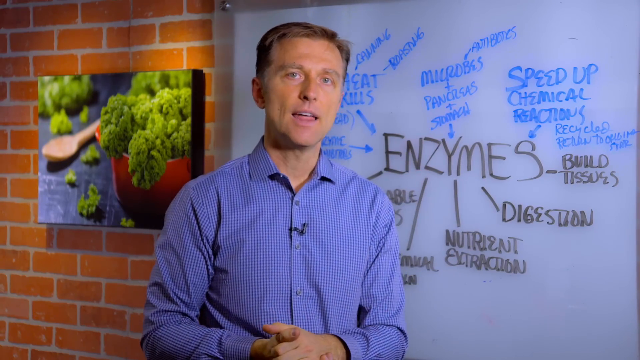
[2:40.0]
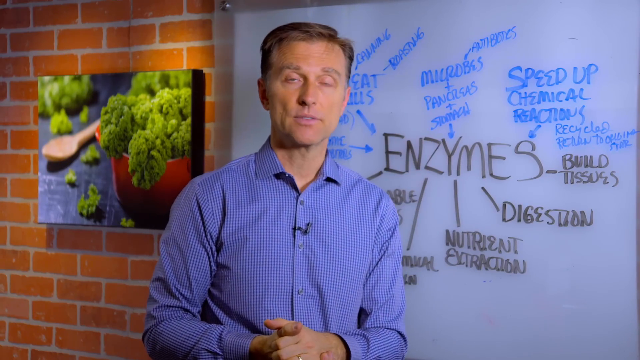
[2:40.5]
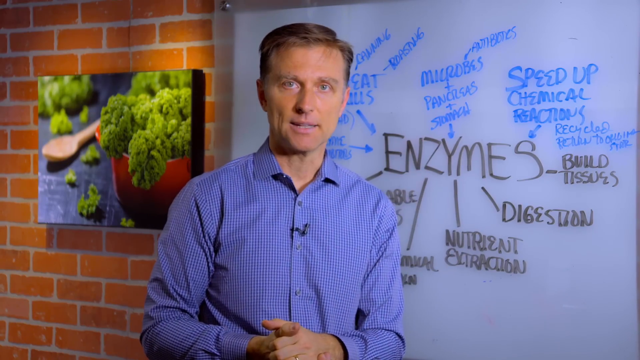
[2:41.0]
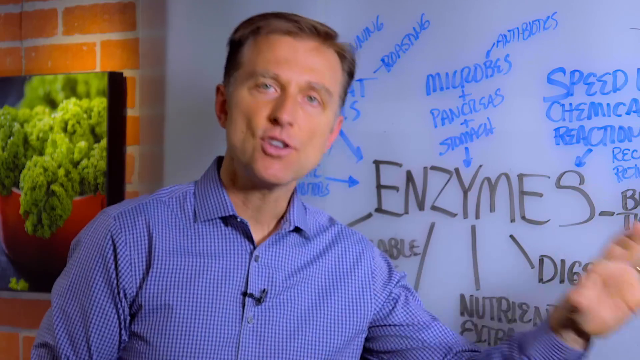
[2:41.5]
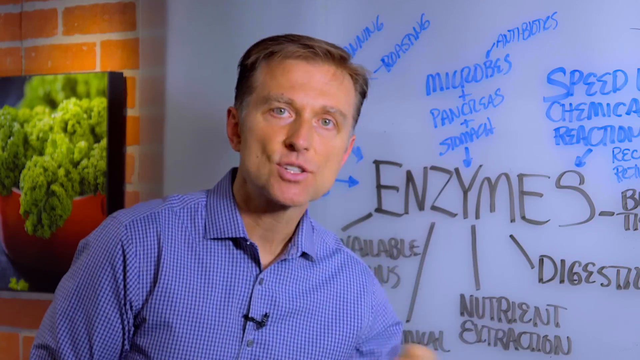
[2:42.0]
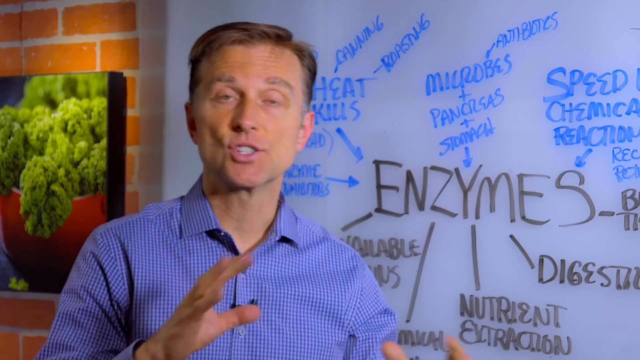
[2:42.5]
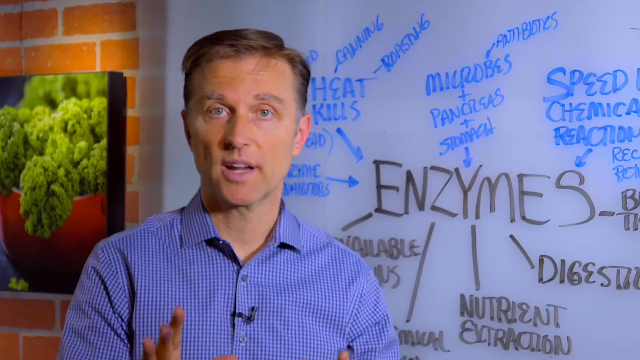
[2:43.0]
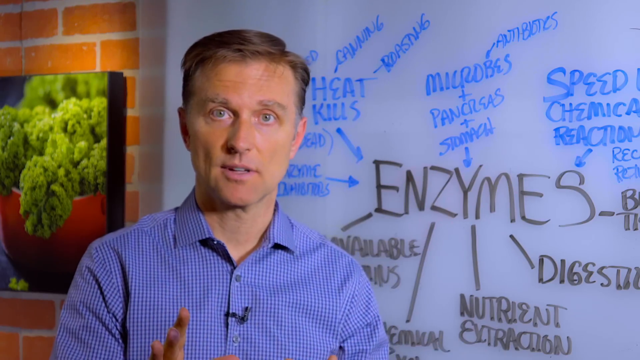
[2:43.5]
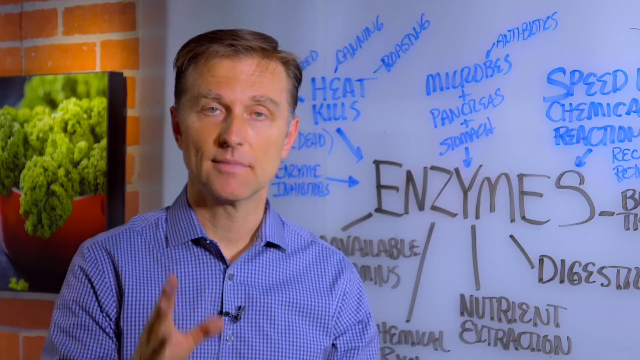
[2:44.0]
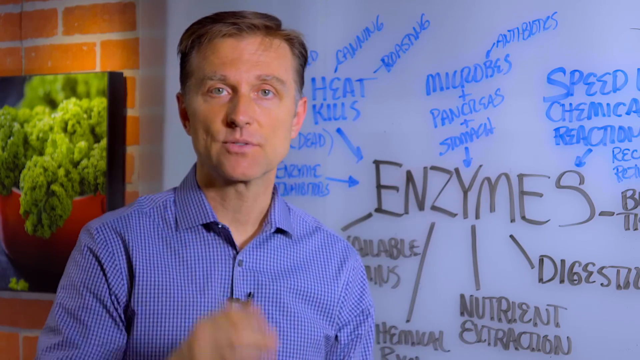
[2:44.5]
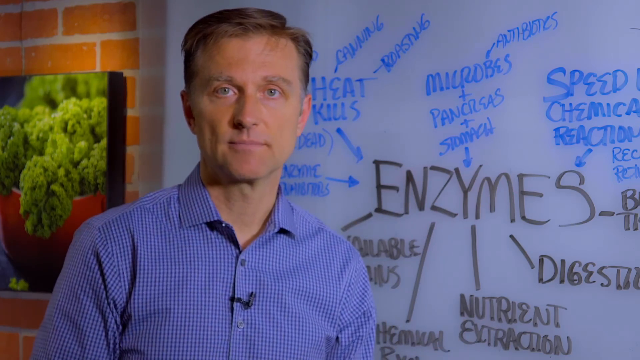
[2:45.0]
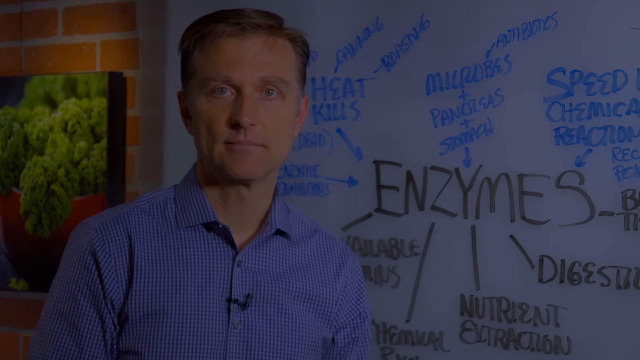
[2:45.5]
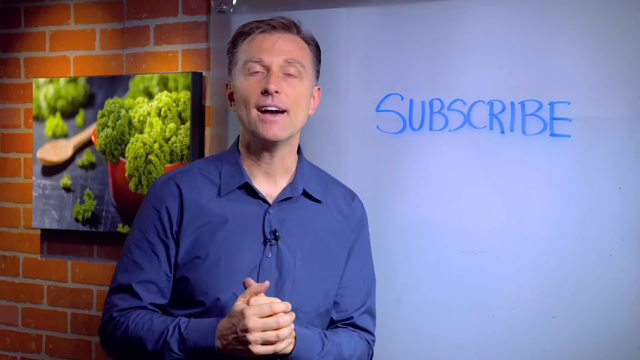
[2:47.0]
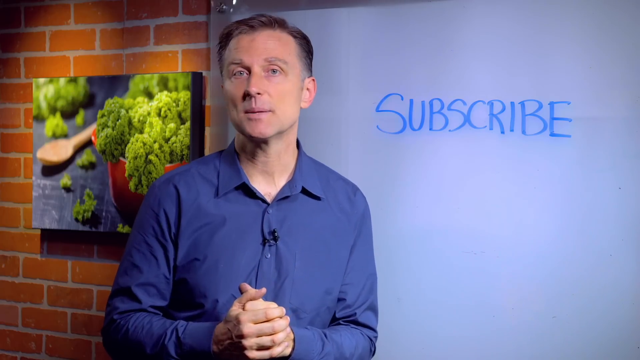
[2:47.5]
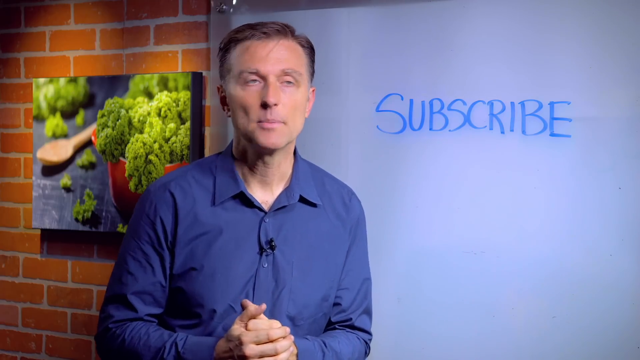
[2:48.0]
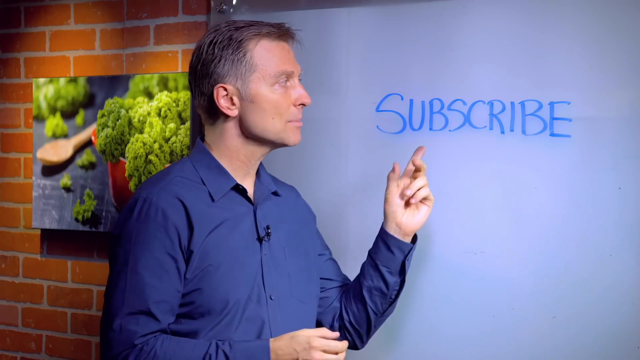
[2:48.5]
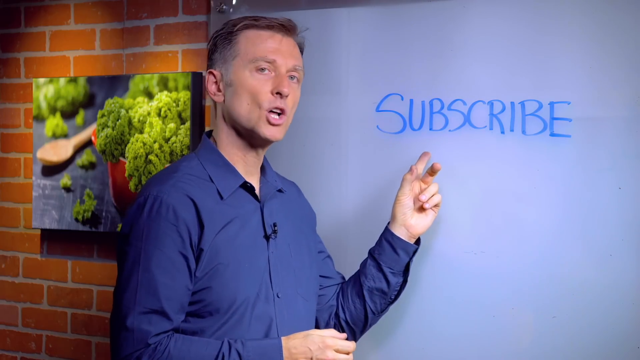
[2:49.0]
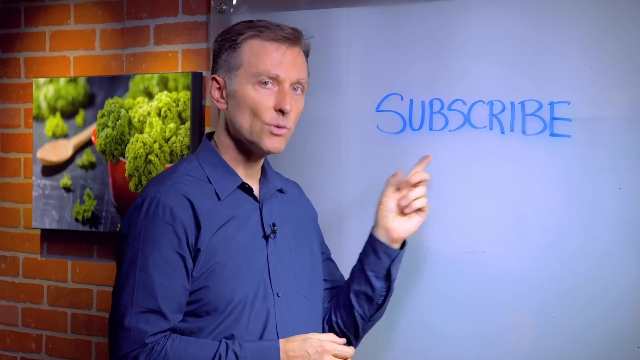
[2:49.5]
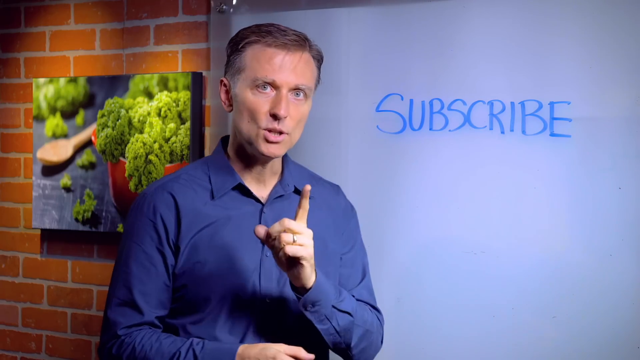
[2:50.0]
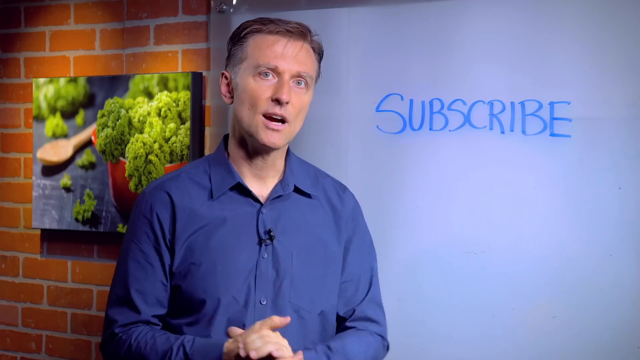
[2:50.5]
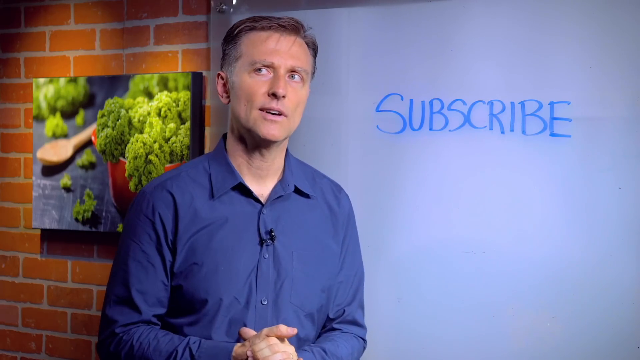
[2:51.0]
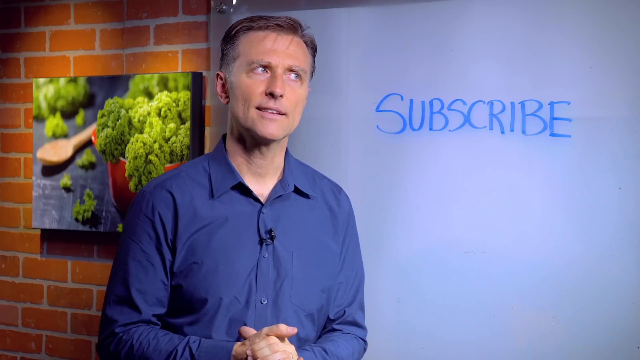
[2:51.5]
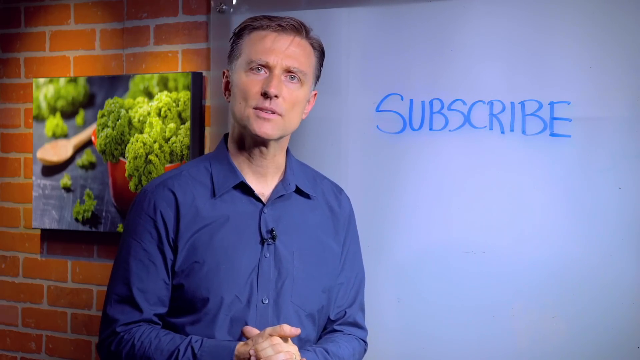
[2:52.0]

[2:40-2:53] The man appears to wrap up and conclude. The screen fades to black, and then the same man appears, this time in a blue shirt. The words on the board have been erased and only the word "subscribe" is written on it; the man seems to be asking viewers to subscribe and like the video.